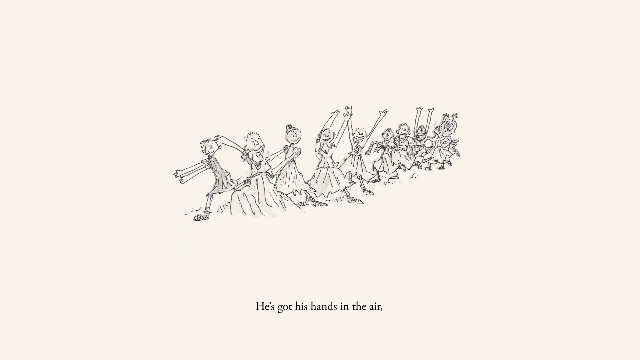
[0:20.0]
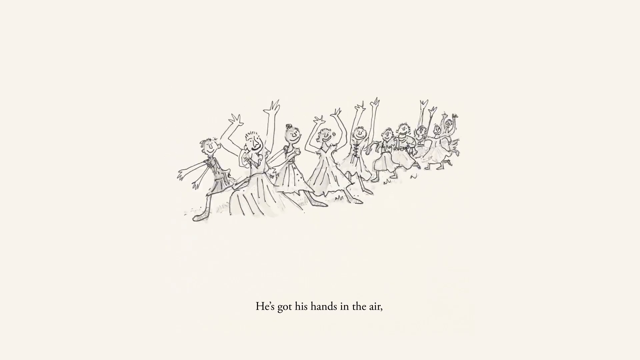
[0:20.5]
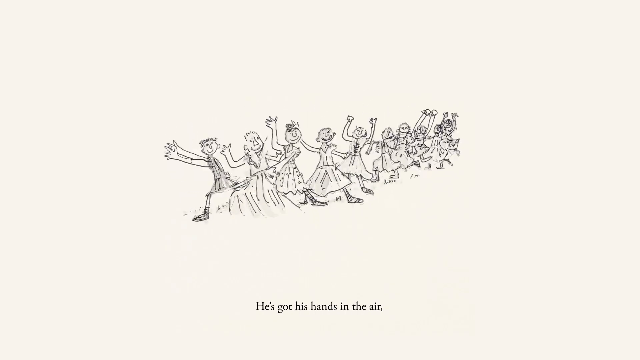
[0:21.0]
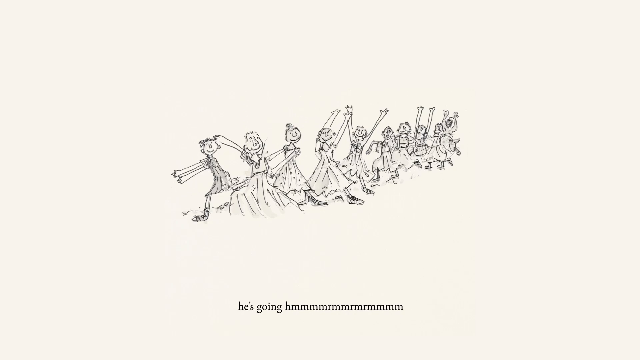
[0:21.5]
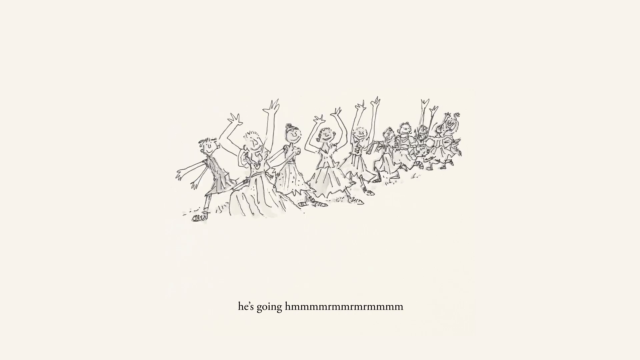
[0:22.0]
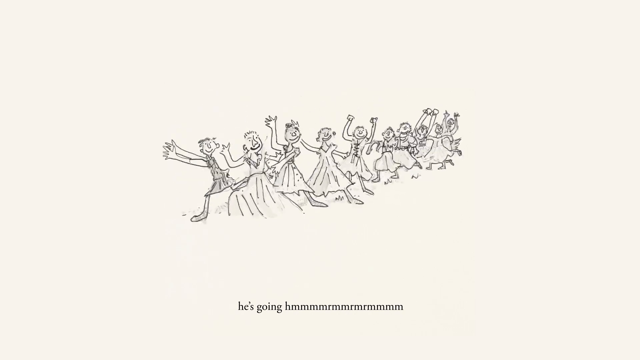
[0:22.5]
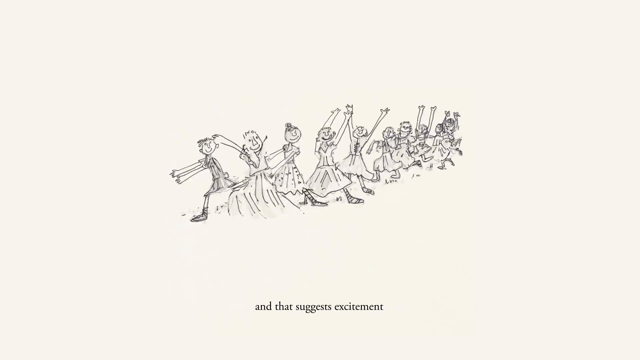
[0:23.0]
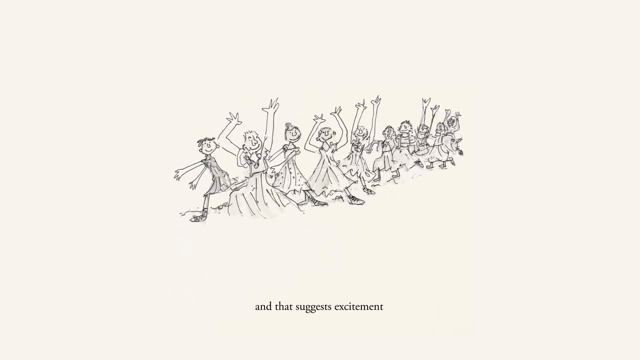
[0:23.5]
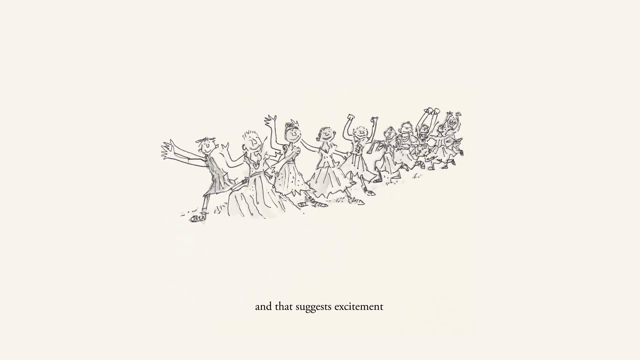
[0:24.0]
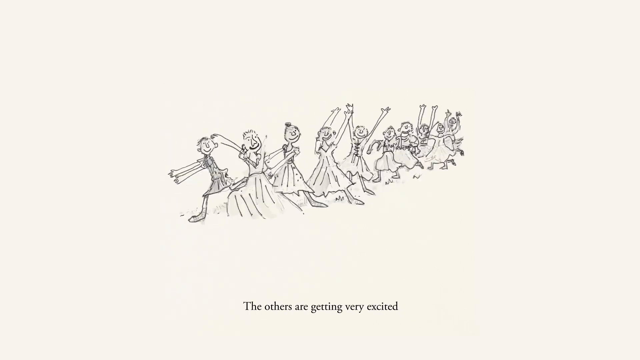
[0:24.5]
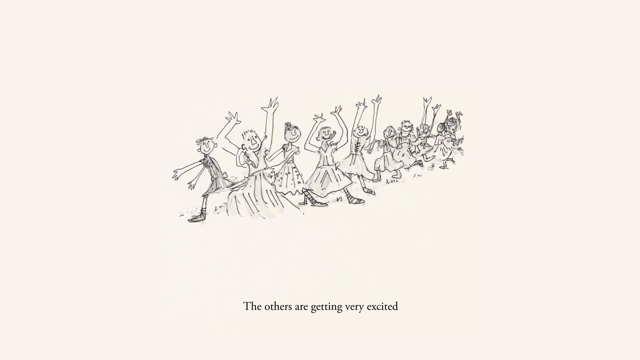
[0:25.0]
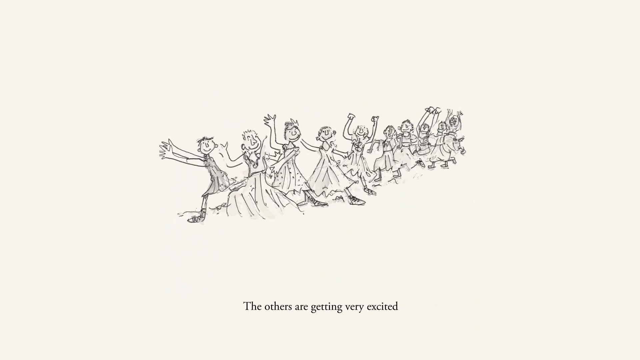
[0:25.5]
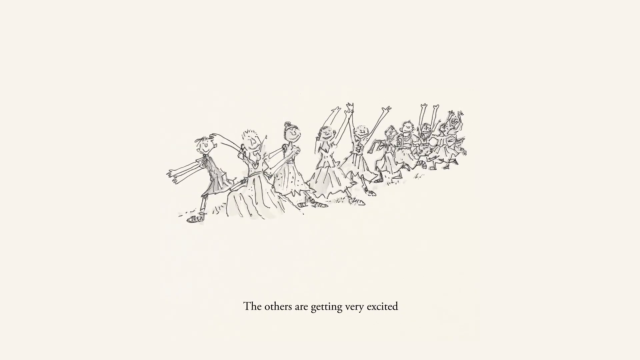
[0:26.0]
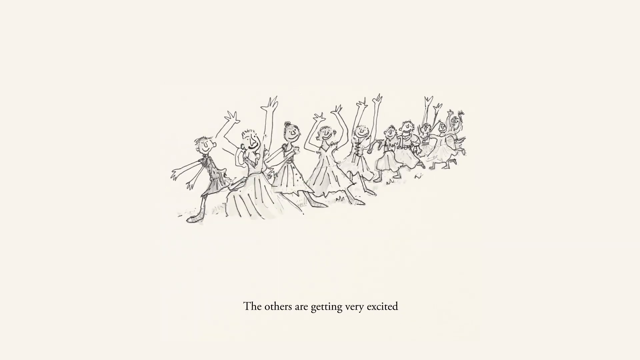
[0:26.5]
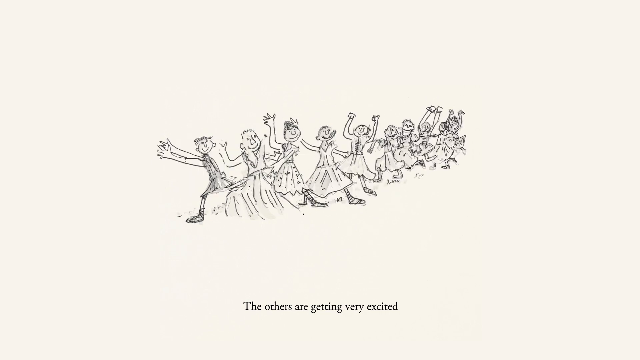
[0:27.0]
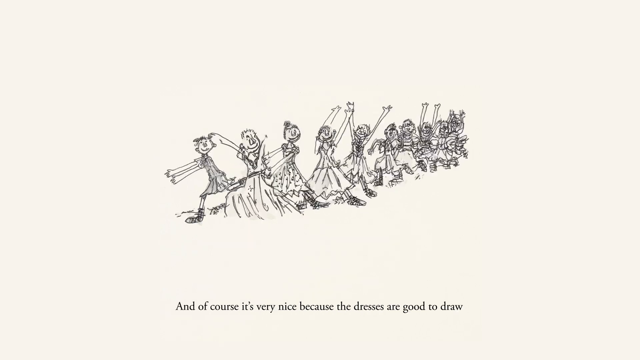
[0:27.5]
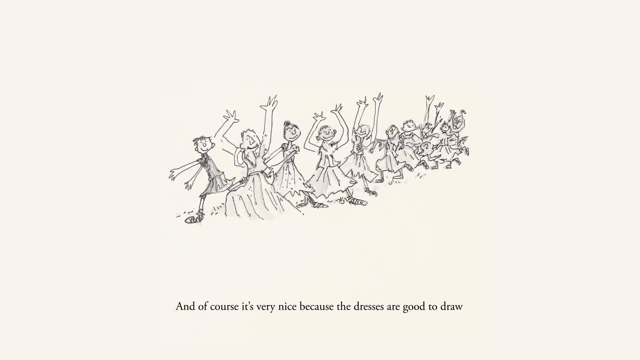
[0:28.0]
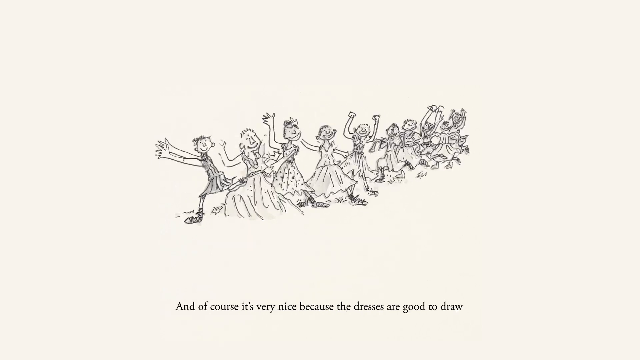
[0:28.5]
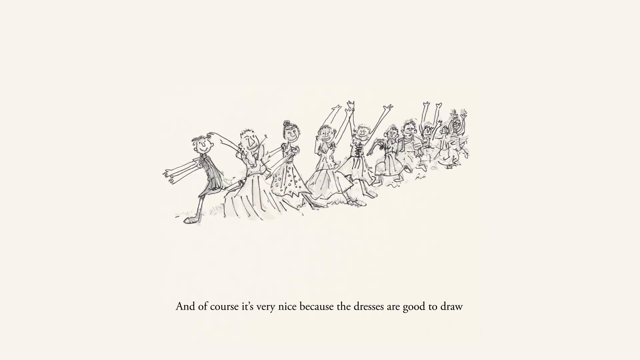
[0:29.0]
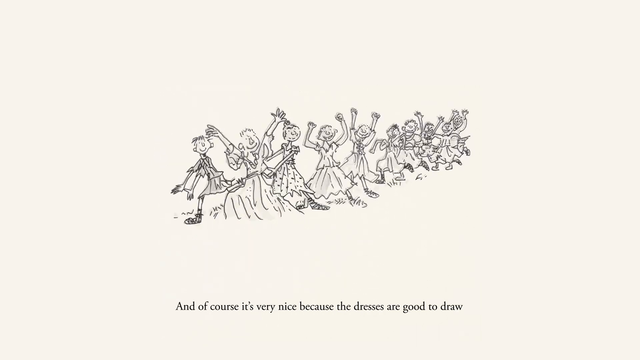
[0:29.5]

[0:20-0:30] Pencil-drawn characters from the David Williams book are in the middle of the scene with their hands raised, suggesting excitement. They keep raising their arms as if in celebration, and all of them are smiling. Text reads "the others are getting very excited" and "and of course, it's very nice because the dresses are good to draw." The pencil drawings show several children or teenagers, all in dresses, with their arms in the air as they continue to celebrate.